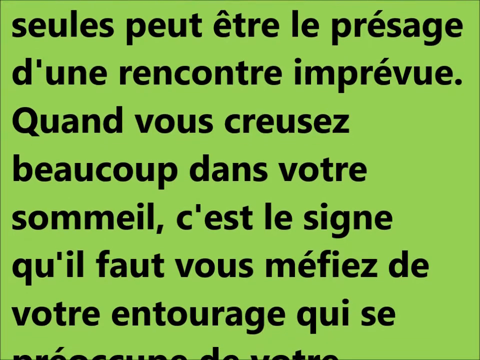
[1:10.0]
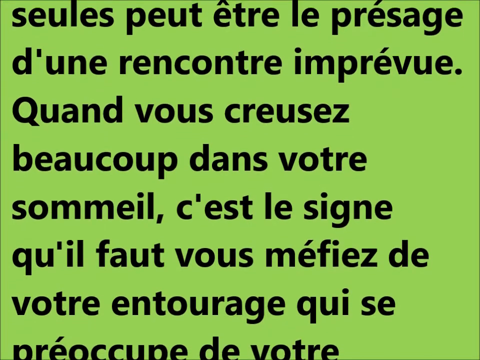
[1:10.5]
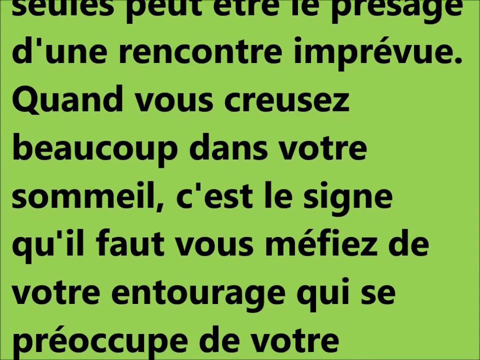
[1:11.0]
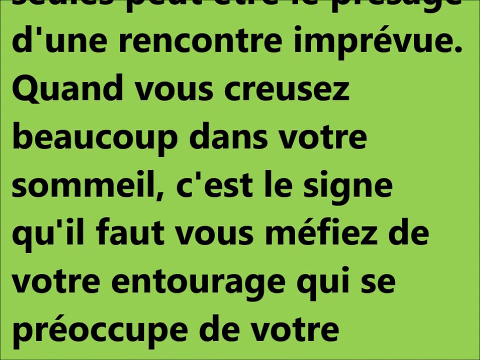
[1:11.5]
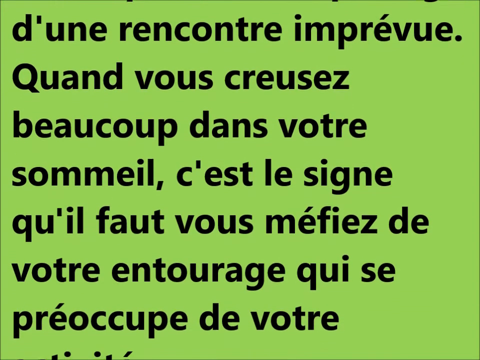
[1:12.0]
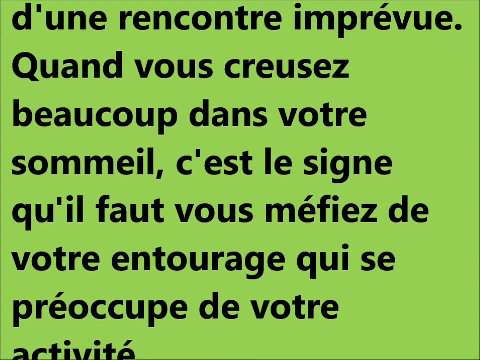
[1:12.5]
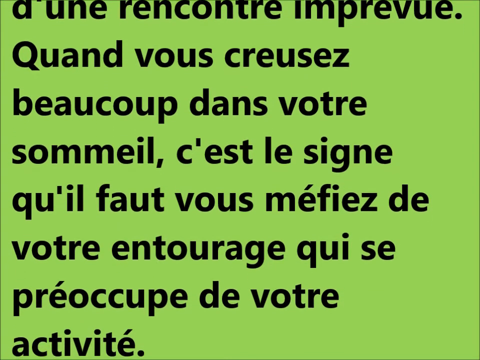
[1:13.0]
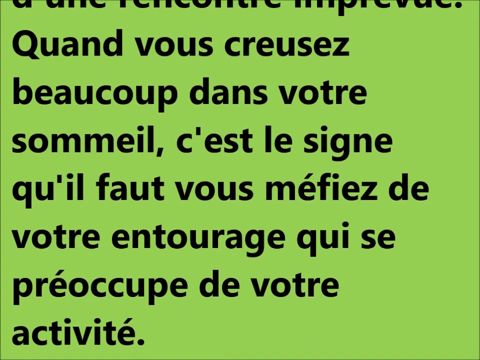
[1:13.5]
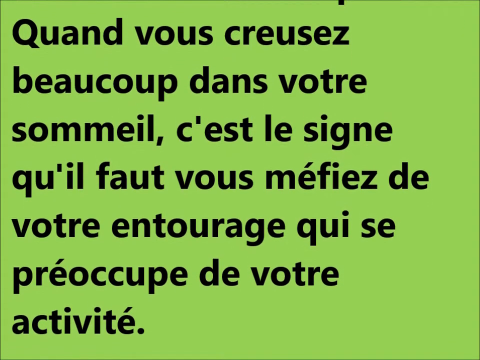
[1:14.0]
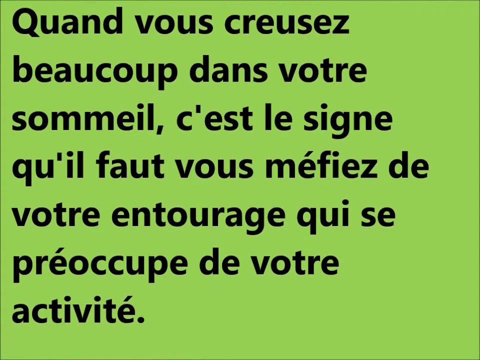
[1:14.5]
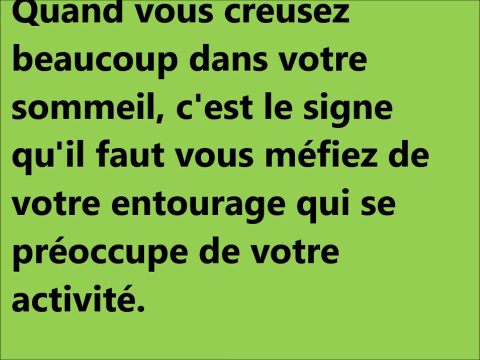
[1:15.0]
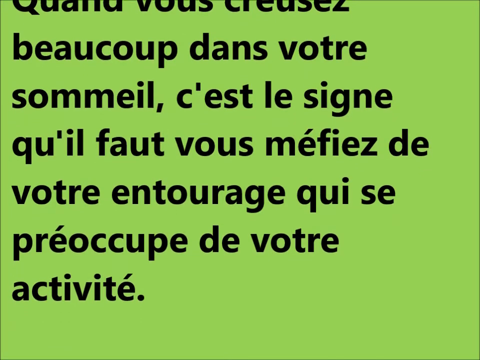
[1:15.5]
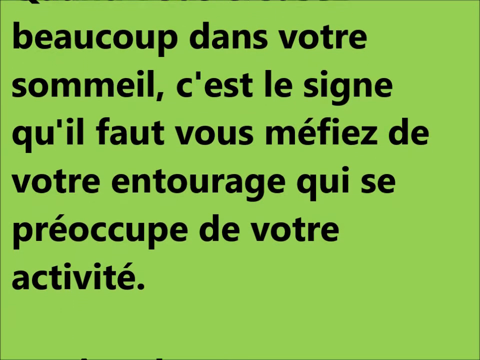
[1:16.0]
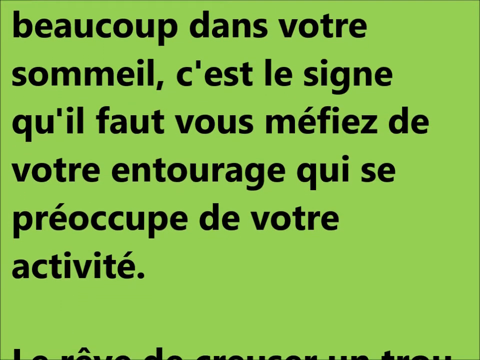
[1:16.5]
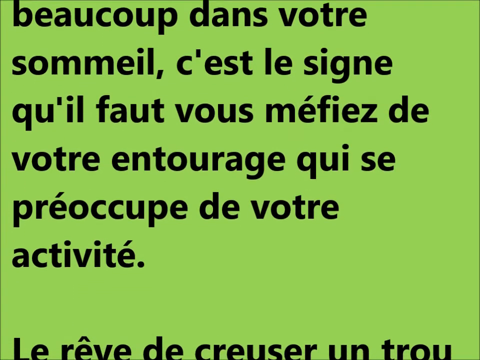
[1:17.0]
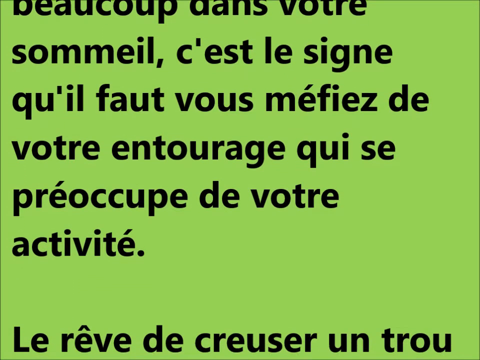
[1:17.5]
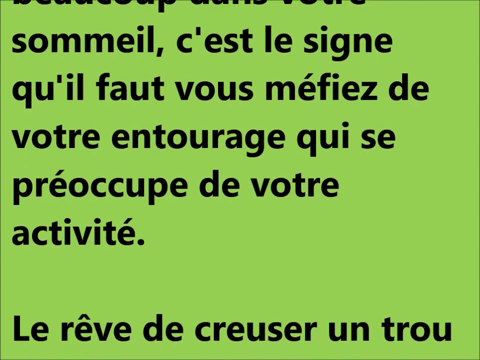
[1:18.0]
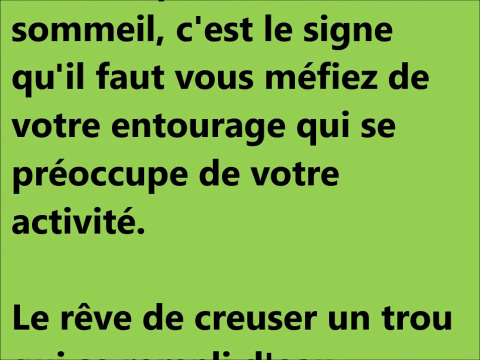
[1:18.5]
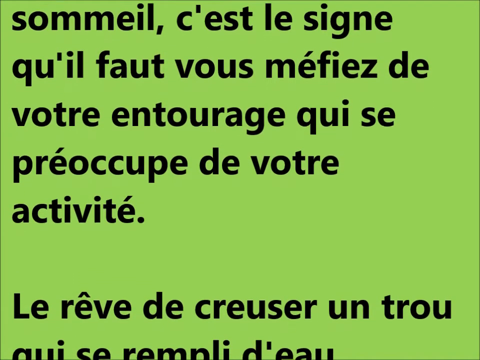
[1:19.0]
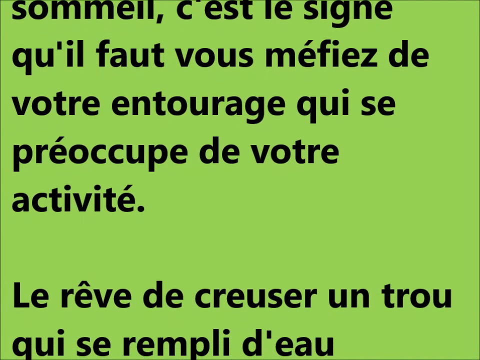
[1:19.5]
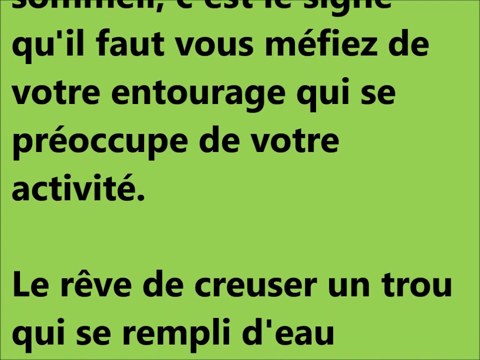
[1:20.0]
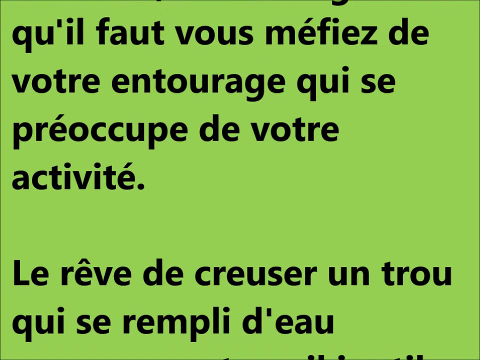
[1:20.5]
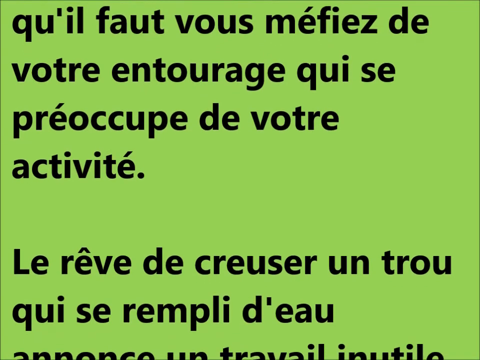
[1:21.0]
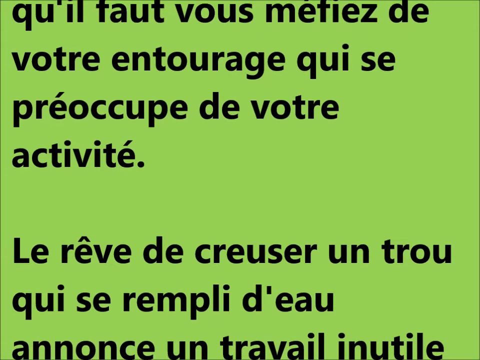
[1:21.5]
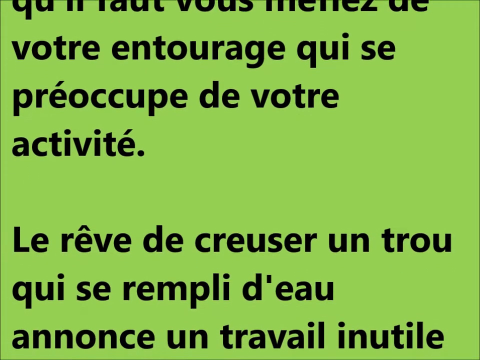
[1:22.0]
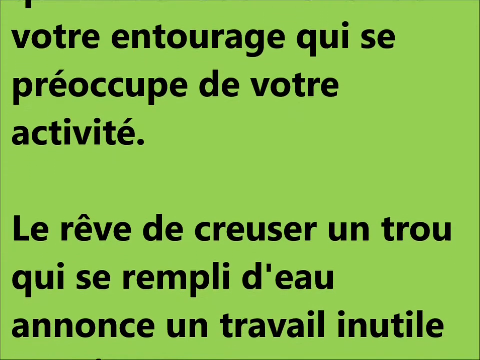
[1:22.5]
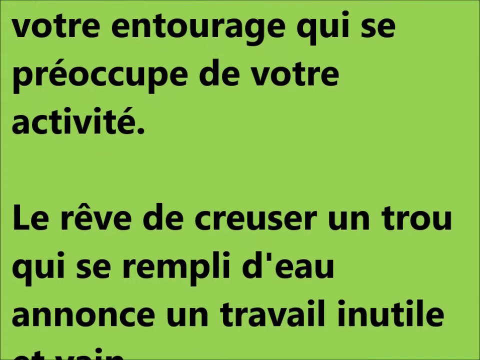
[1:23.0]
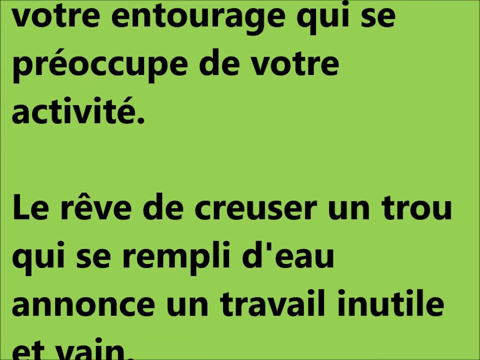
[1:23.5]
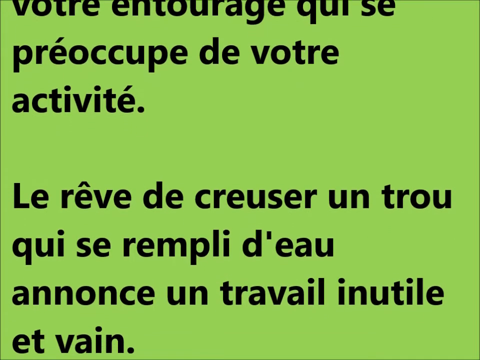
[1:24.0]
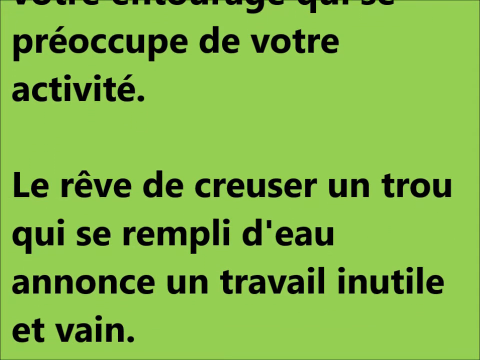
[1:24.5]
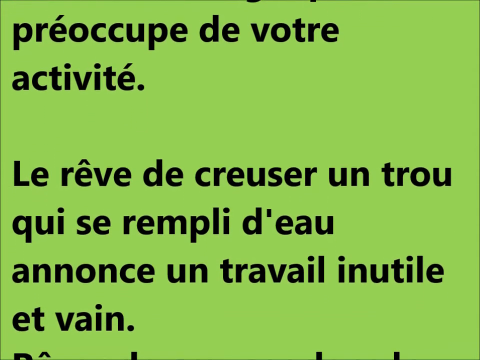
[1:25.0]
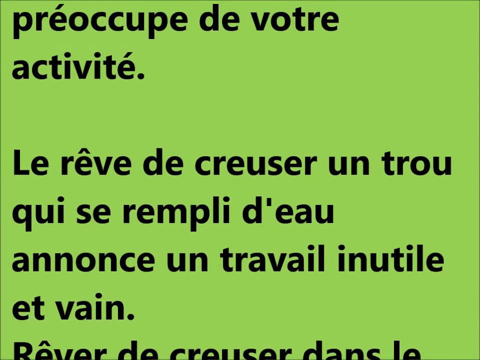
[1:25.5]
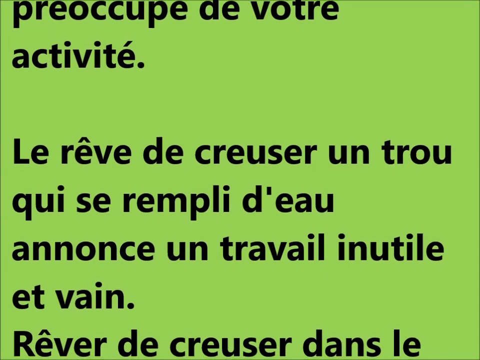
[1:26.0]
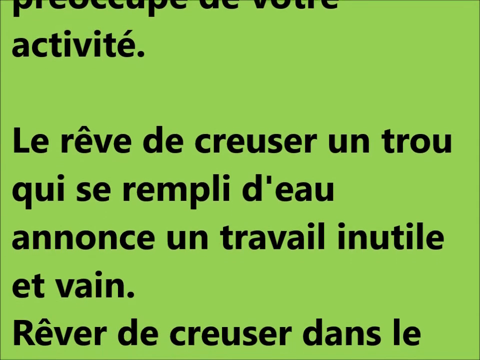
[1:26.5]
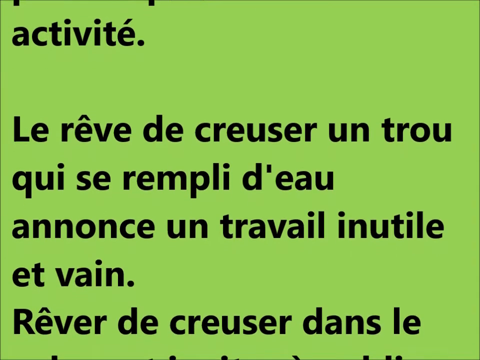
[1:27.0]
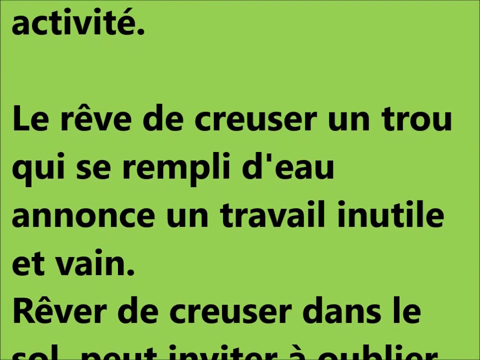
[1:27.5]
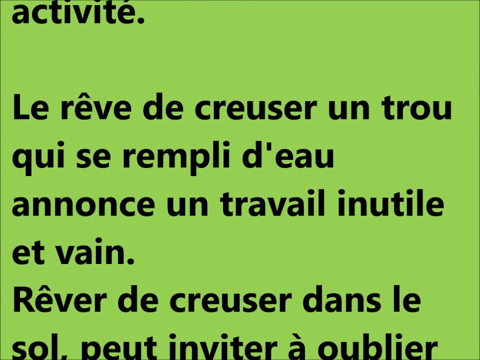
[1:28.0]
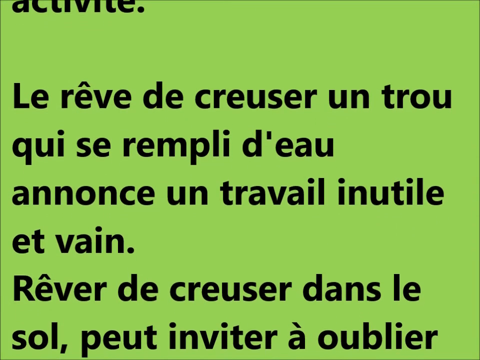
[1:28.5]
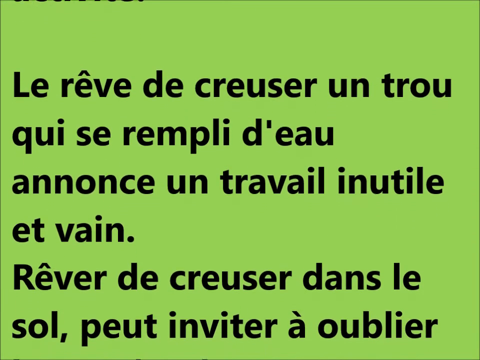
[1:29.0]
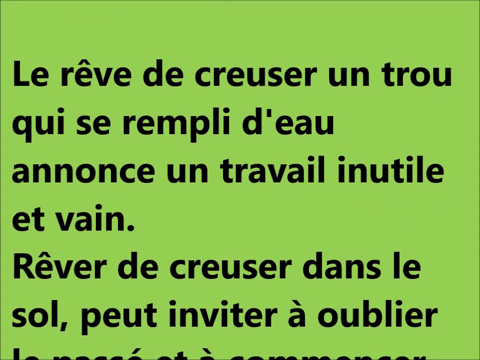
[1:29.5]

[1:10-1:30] Black text in a dark bold font, all in French, scrolls up from the bottom to the top over a bright light green background. The text describes the rêve de creuser, a type of dream that unveils a truth or solves a problem for the dreamer, and goes on to describe more about these dreams. The video is entirely computer-generated, with no real-world setting.